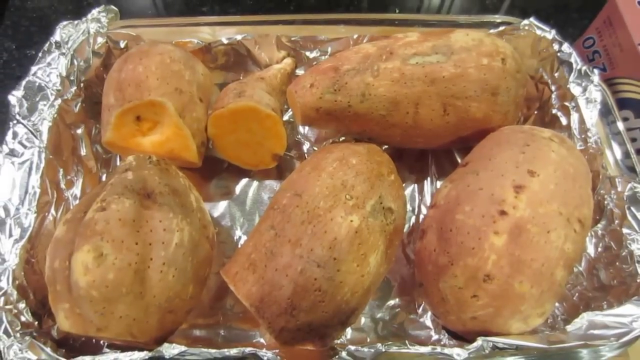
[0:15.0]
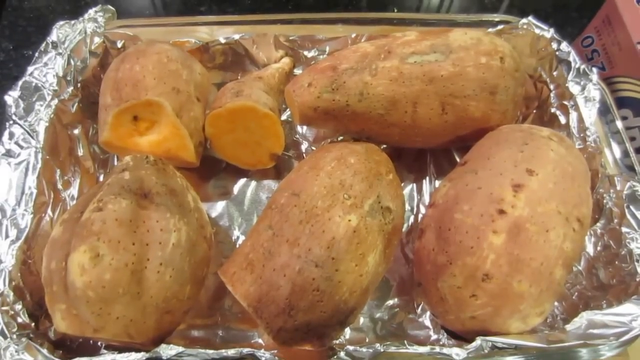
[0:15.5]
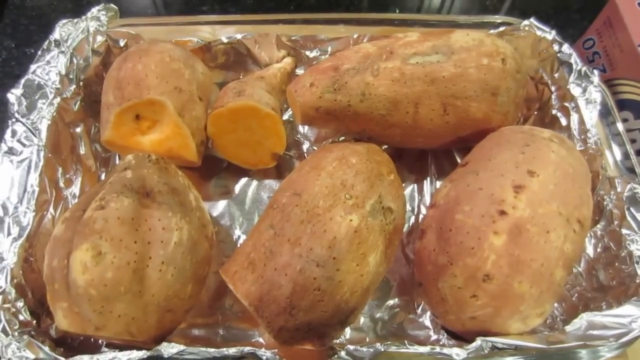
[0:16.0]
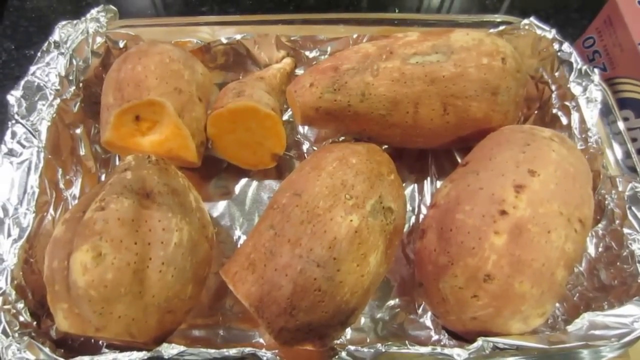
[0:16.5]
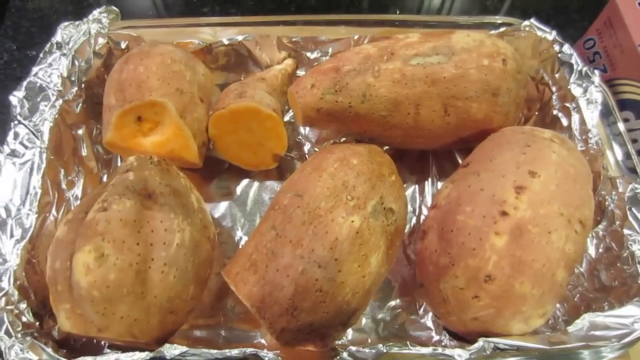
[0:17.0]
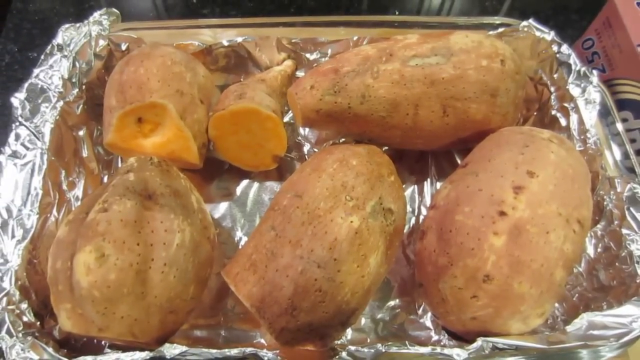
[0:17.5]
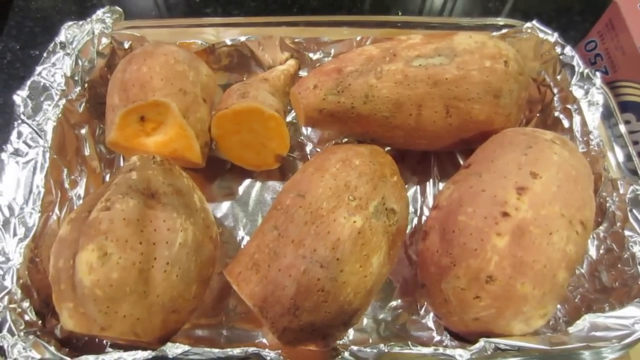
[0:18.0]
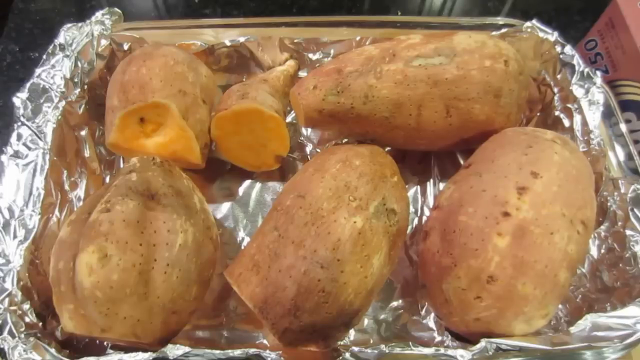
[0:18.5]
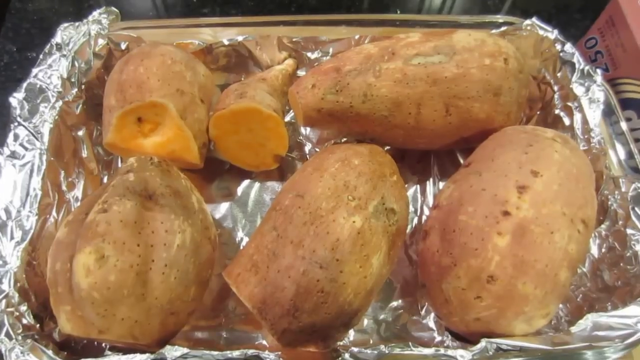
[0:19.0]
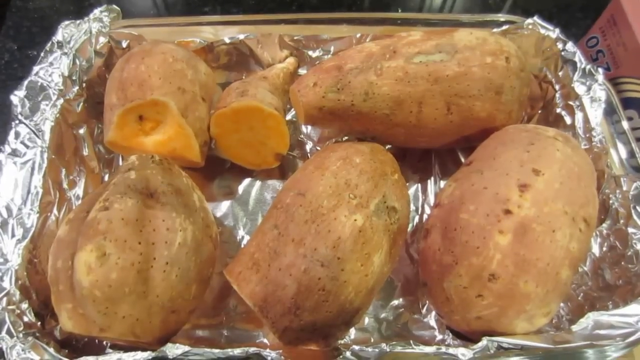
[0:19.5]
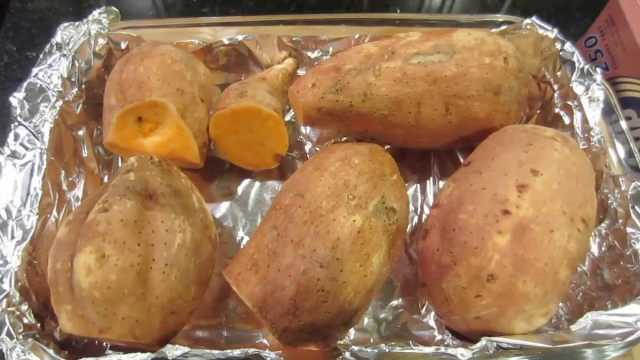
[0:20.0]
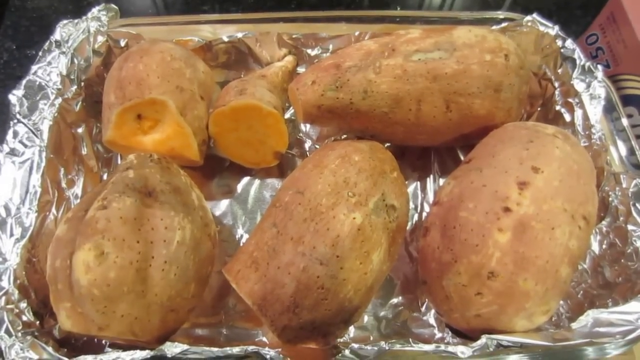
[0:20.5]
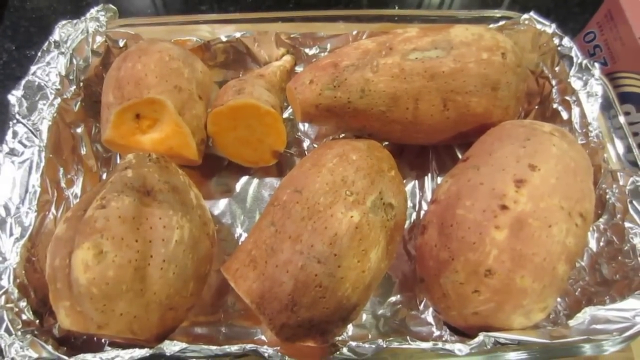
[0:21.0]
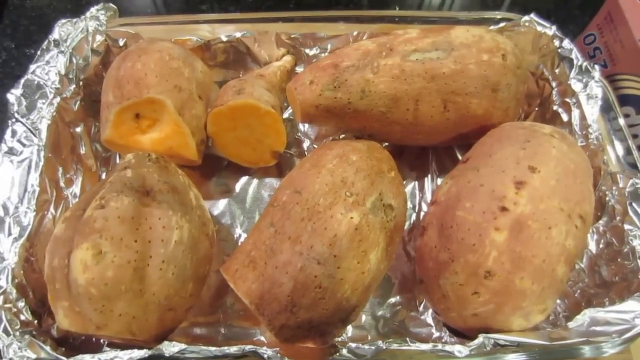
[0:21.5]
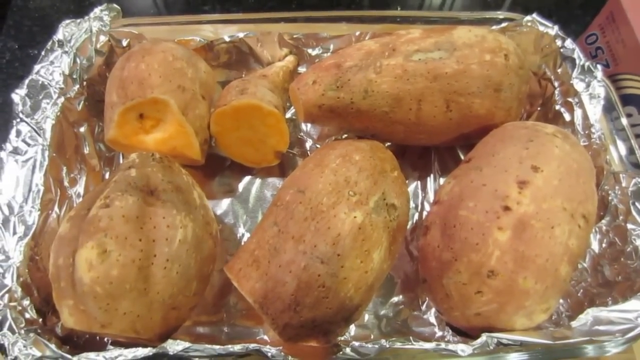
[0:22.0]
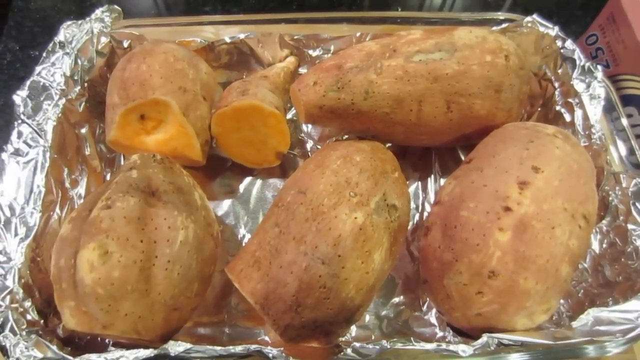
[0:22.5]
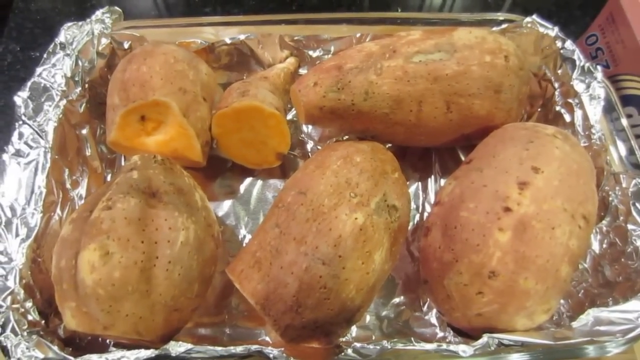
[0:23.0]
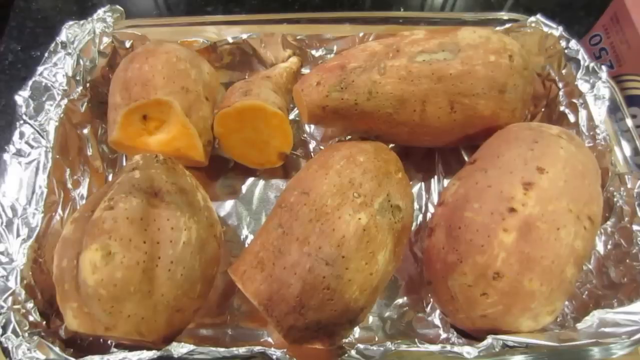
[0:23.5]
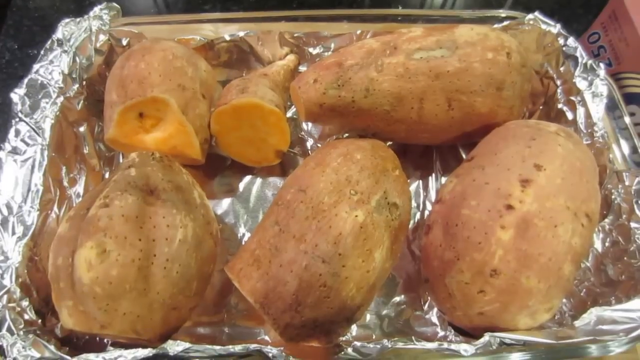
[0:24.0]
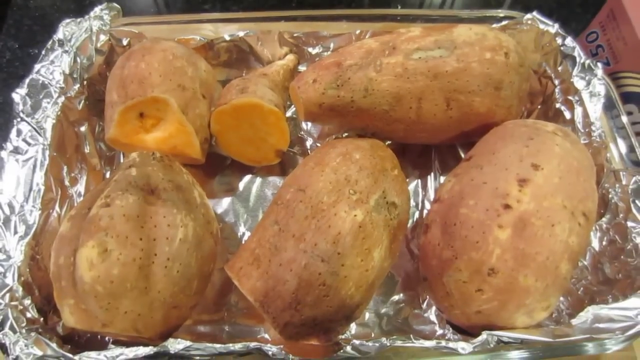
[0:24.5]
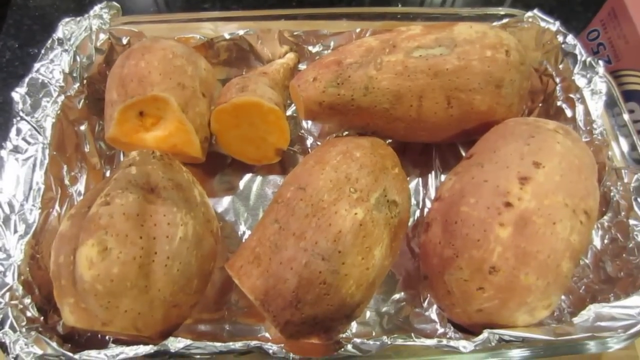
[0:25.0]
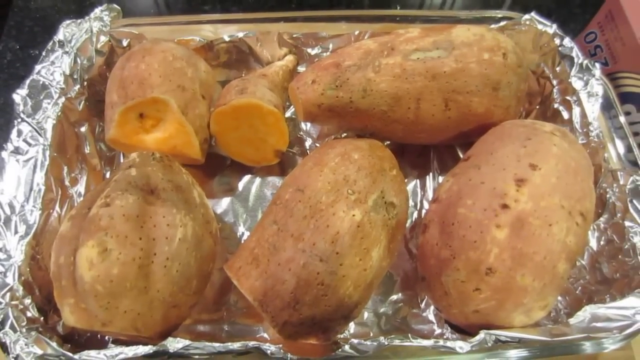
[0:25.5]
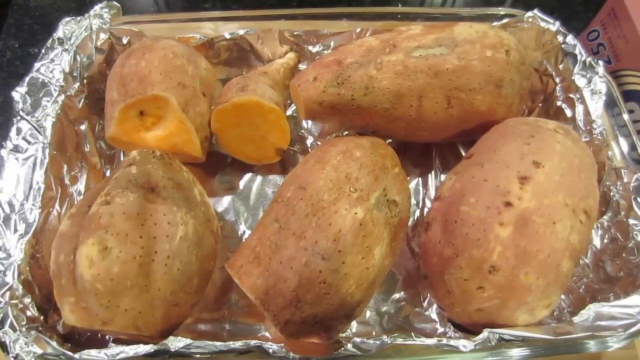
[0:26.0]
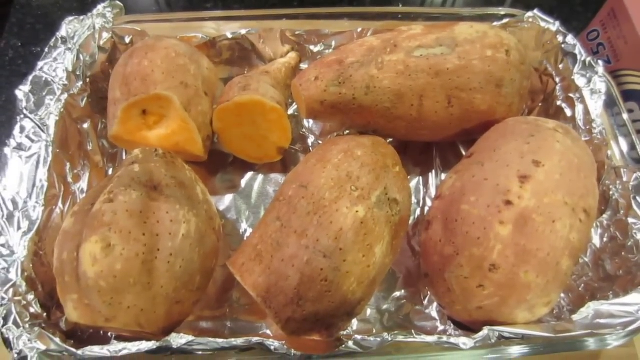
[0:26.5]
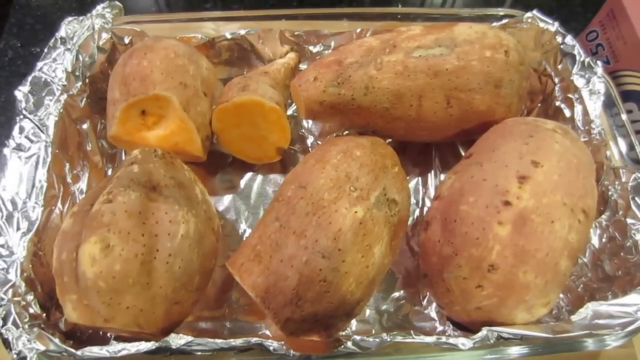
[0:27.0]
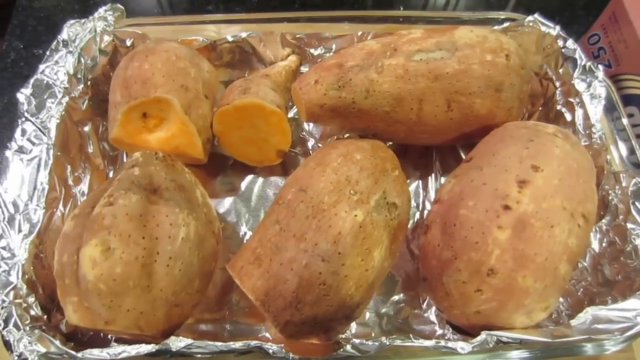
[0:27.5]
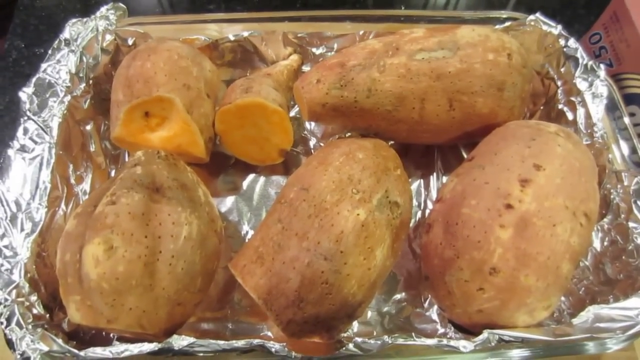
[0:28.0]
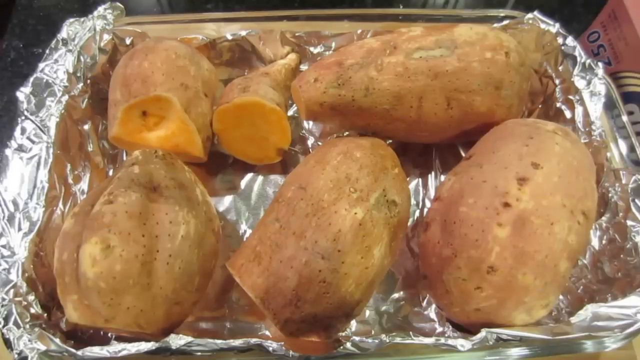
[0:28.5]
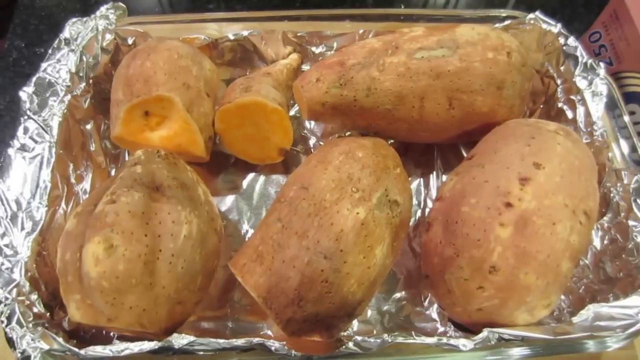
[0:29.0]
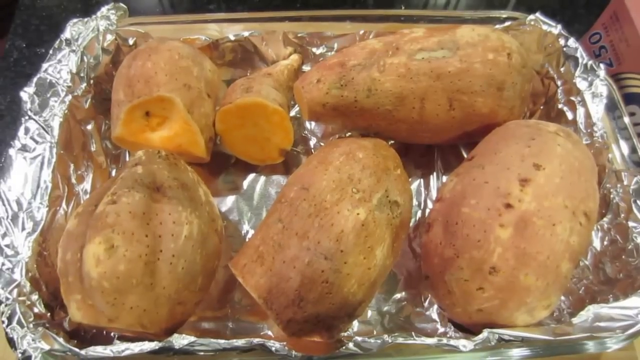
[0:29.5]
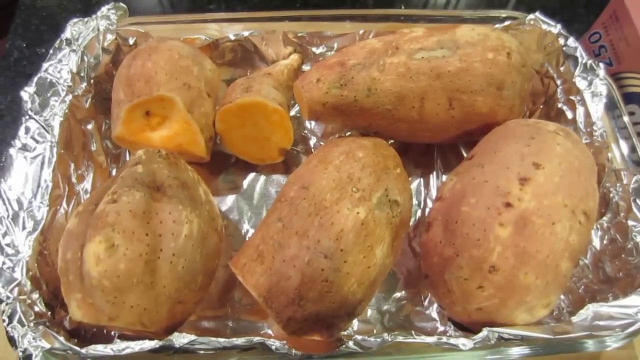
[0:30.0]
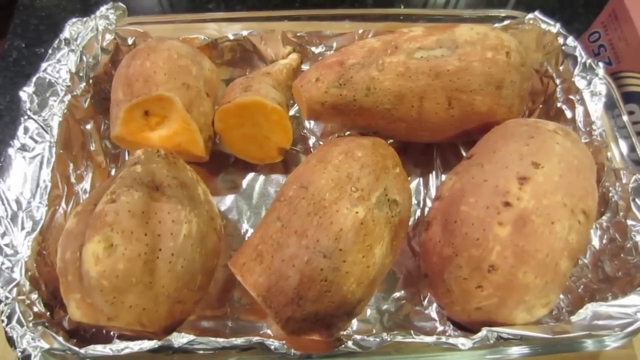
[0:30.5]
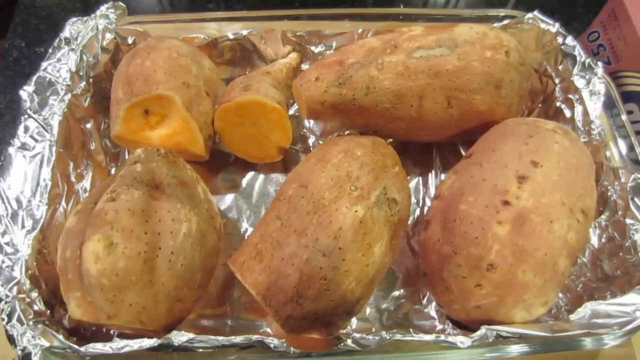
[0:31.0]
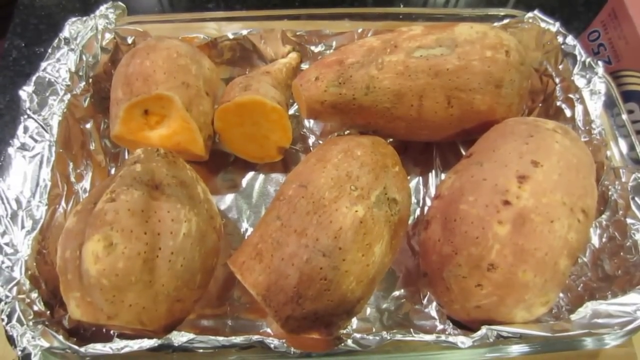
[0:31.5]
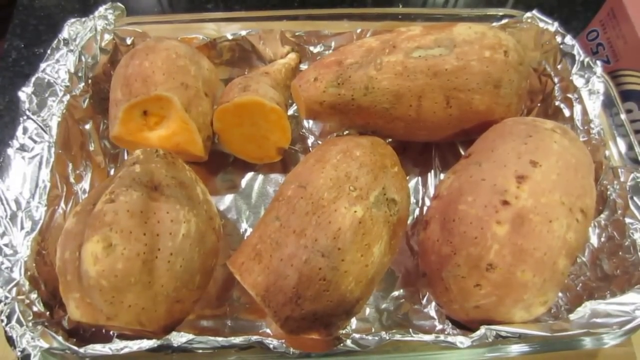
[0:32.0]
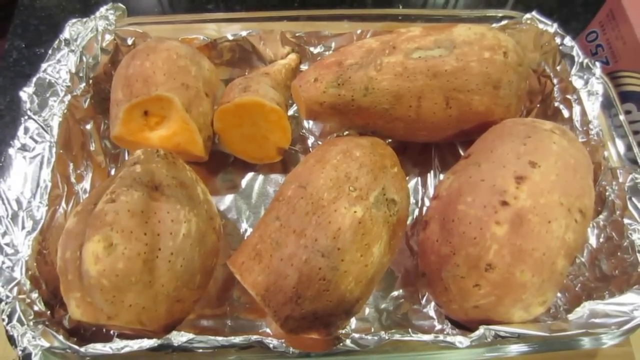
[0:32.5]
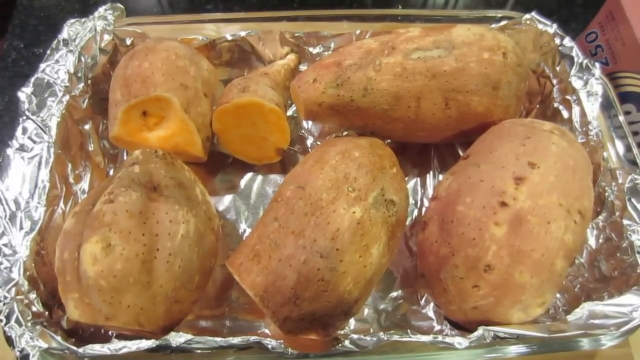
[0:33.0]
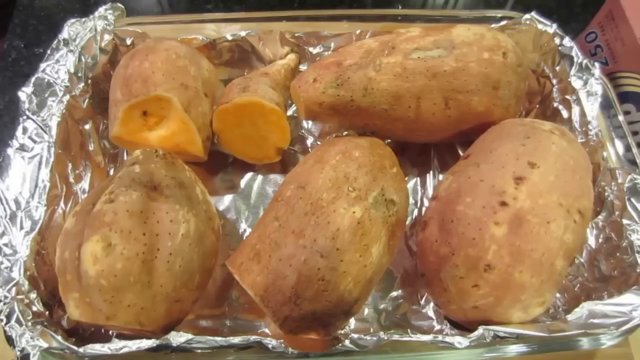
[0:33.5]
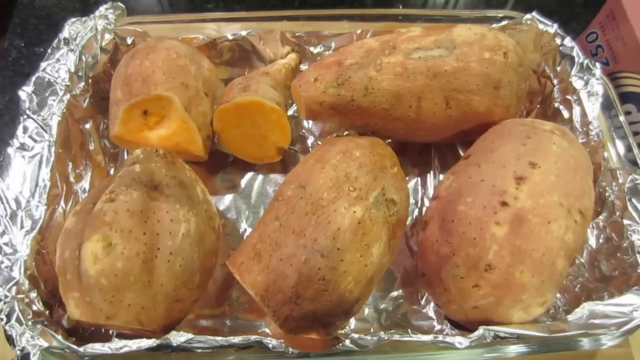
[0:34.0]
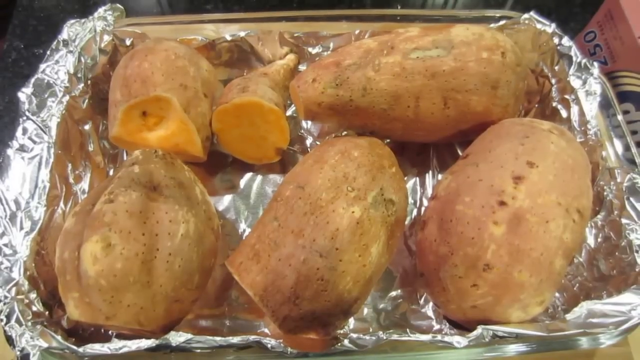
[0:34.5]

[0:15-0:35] The uncooked sweet potatoes are arranged very snugly side by side in a deep glass baking dish lined with aluminum foil, with small holes on top as if punctured by a fork. The foil is crinkled on the left and right edges and appears unbaked, just as the sweet potatoes appear unbaked. There are six pieces of sweet potato in total. The ends of most of them appear to be cut off. On the left side, it looks like a sweet potato is cut in half with the two halves placed side by side, and the light orange of the uncooked sweet potato is visible there. The camera shakes slightly as it looks from the top down at the dish.